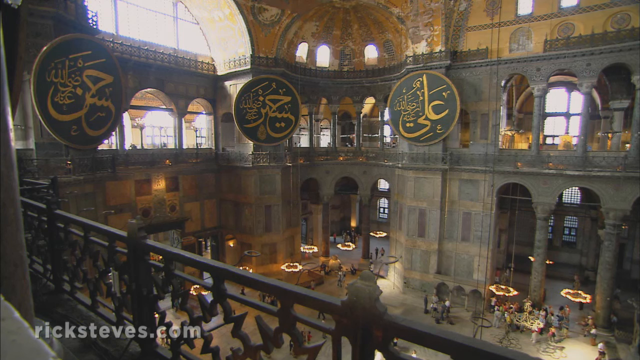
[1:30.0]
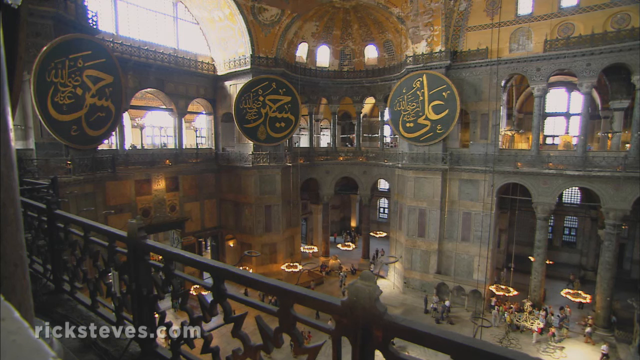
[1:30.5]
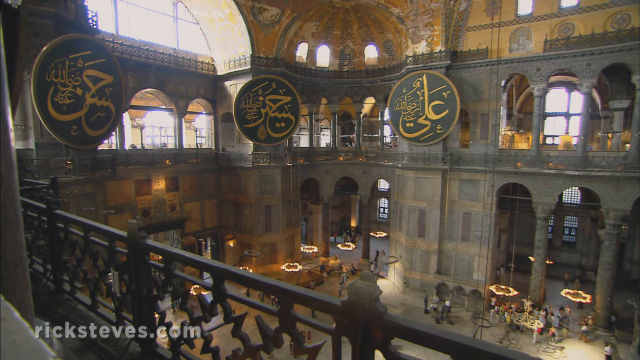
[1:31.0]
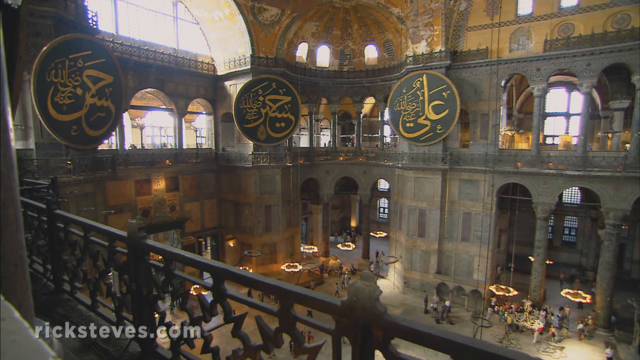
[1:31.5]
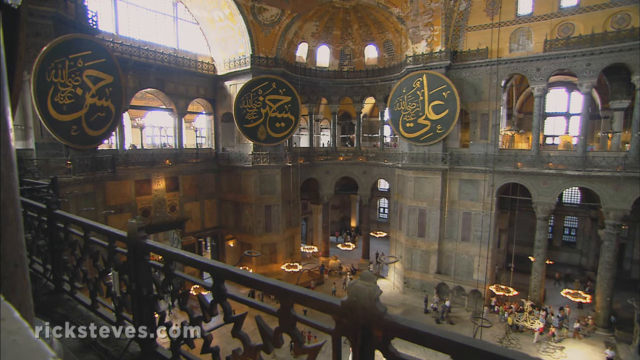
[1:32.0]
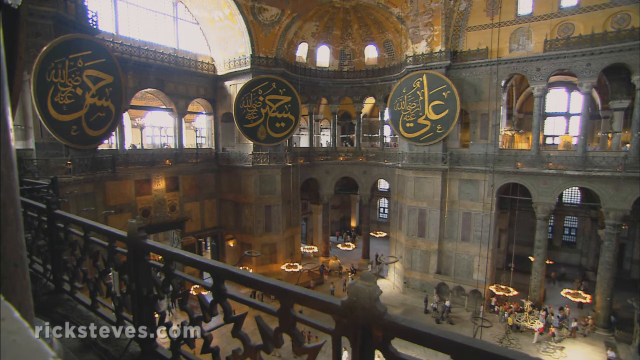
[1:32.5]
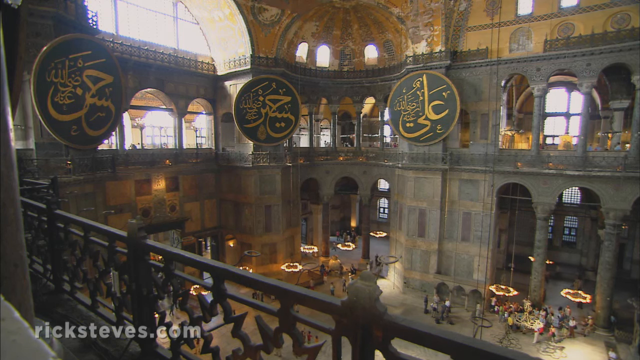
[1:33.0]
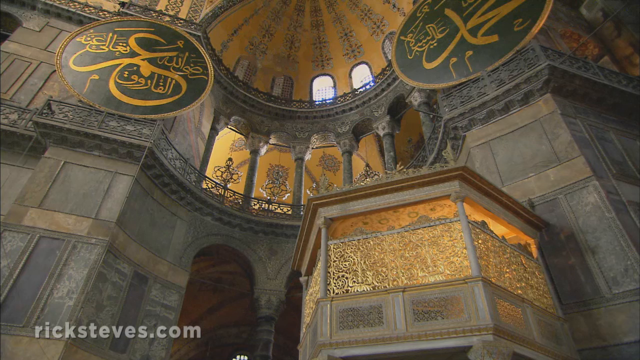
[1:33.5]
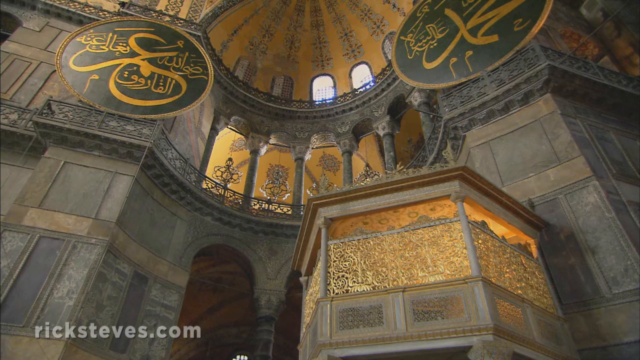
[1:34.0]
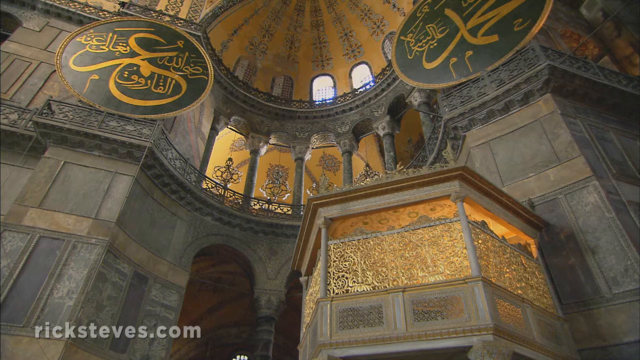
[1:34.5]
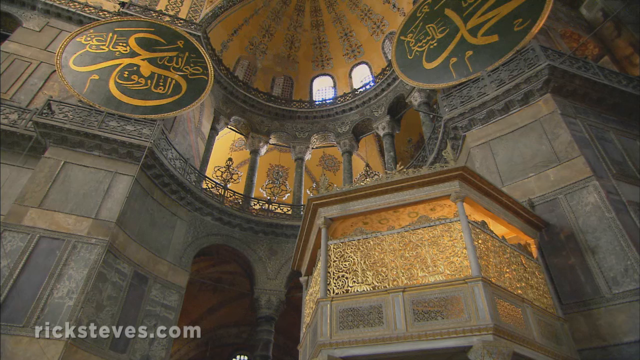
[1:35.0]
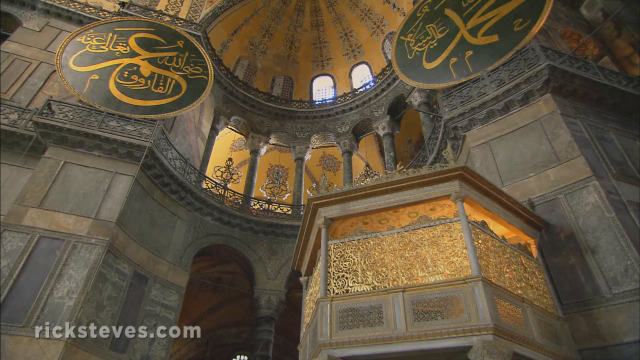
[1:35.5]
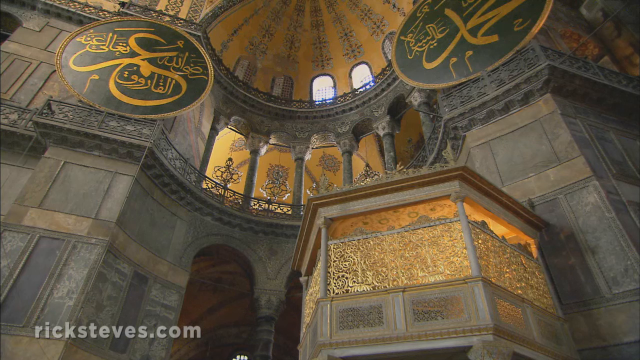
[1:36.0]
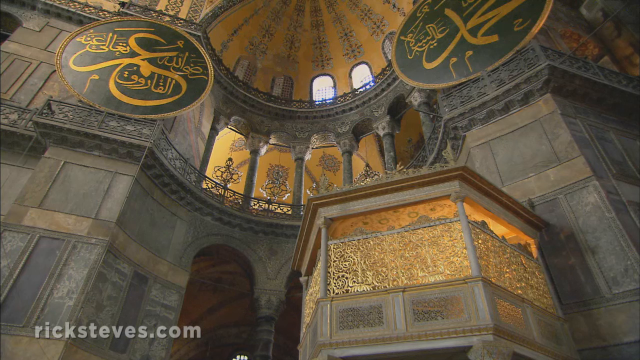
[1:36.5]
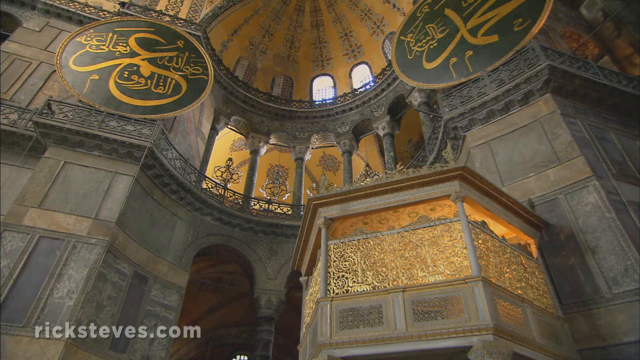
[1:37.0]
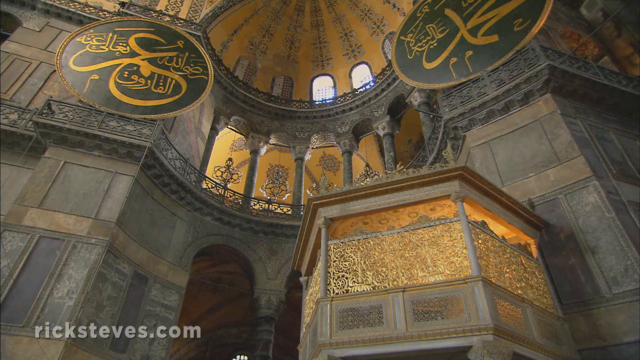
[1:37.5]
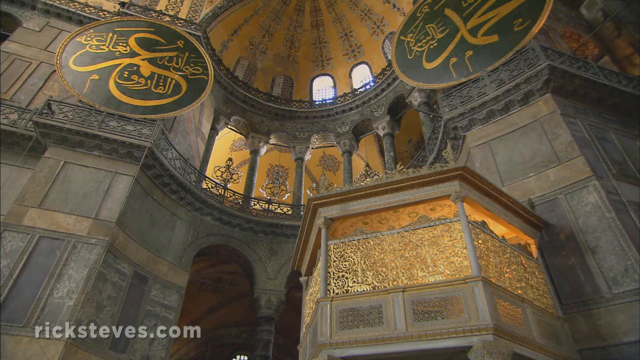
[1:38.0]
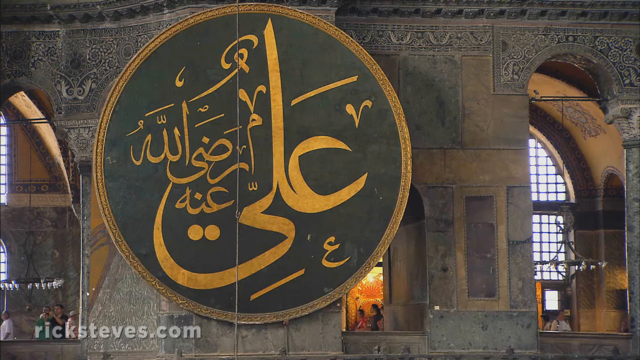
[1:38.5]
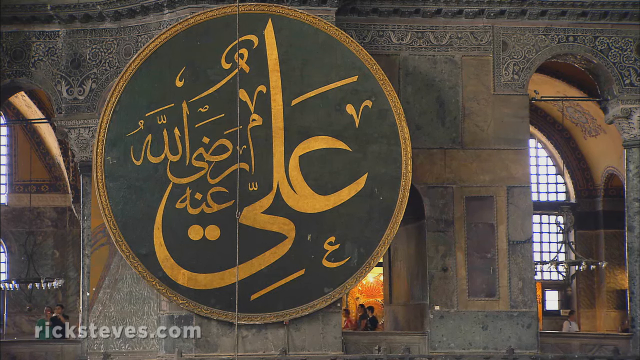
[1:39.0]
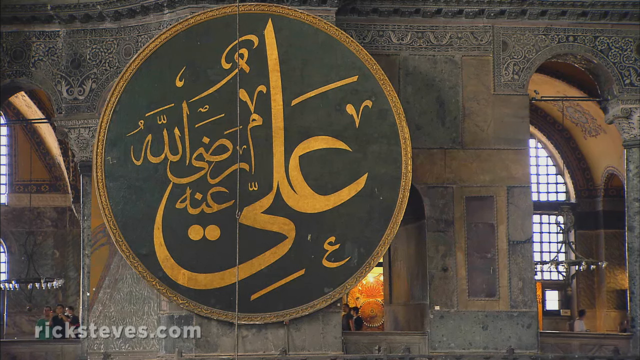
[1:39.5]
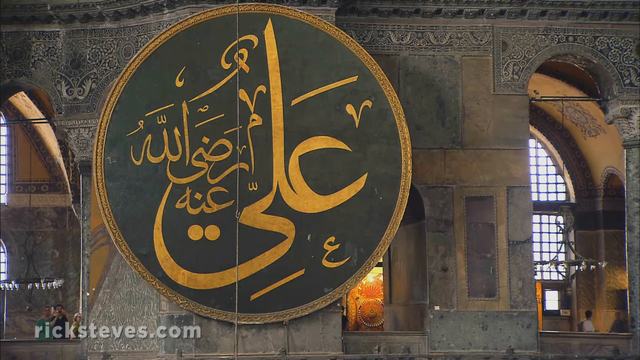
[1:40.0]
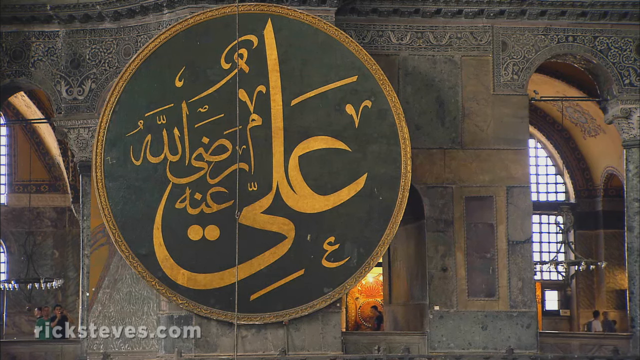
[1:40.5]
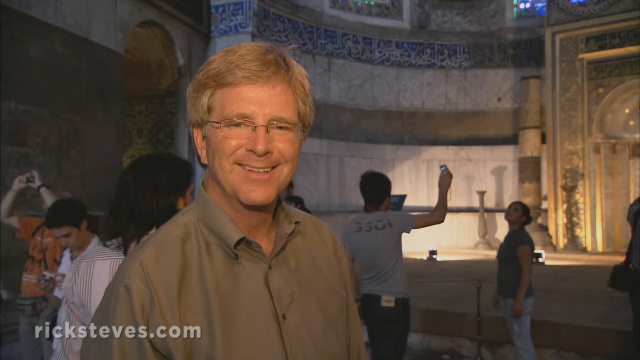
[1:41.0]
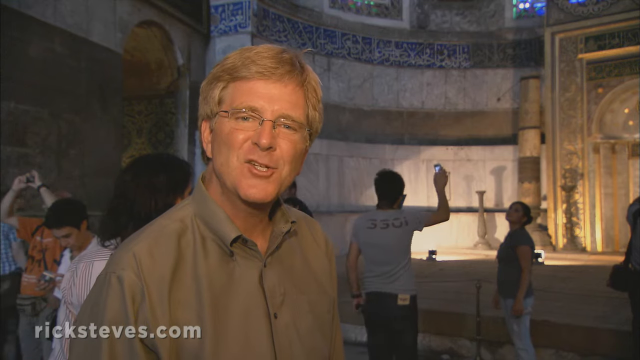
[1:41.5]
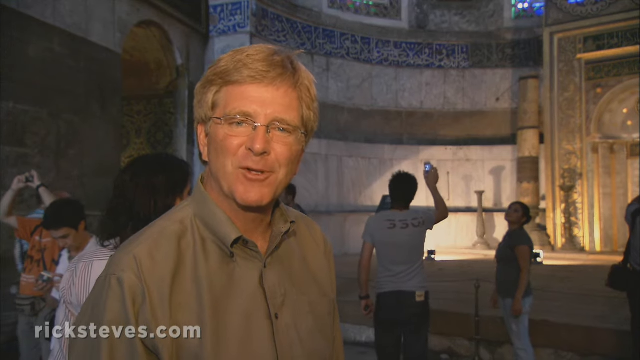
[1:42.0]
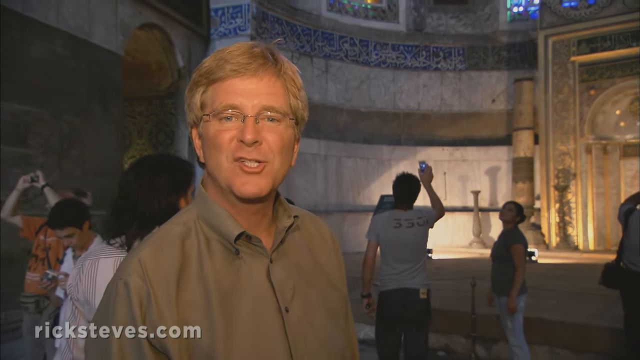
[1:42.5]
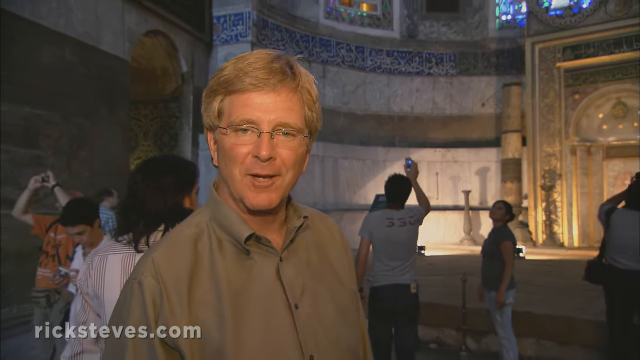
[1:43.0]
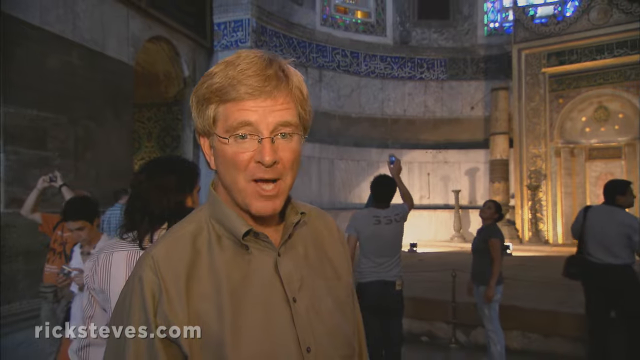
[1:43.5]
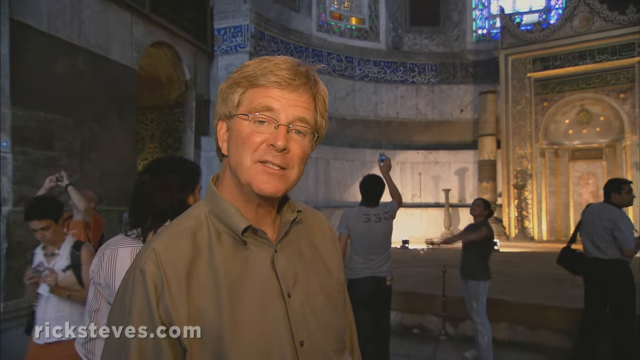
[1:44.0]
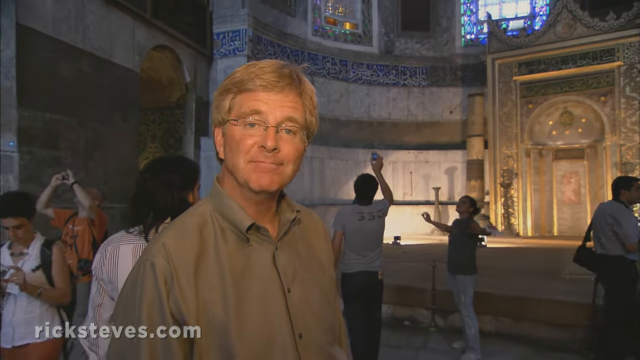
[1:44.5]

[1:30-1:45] The camera pans back to the ceiling, with a side shot from the first level all the way up to the ceiling. There is a small hexagonal structure that resembles an altar. A close-up shows the circular Arabic design in green and gold. Rick Steves explains something to the camera, probably from the second level of the building, while a group of tourists behind him take pictures. Behind him there are some circular sculptures of unknown purpose. The walls have a blue and white pattern that looks Arabic, and there appears to be a fancy light at the top of the walls.